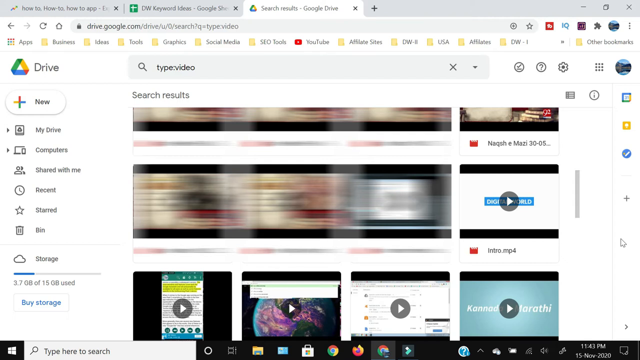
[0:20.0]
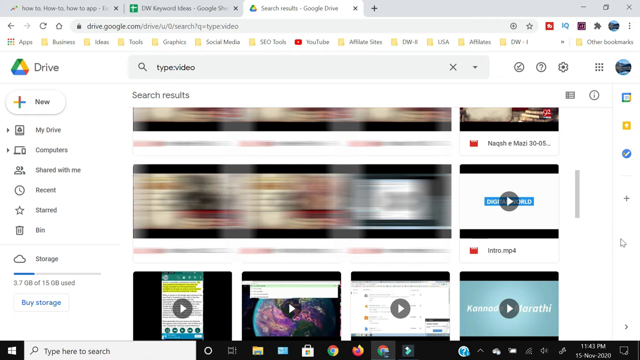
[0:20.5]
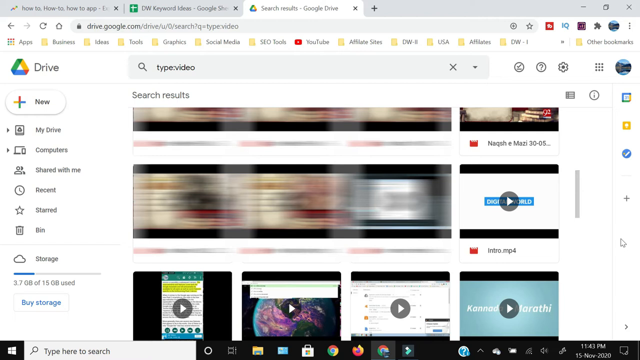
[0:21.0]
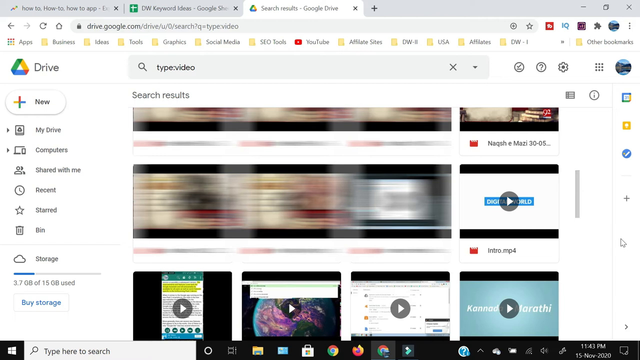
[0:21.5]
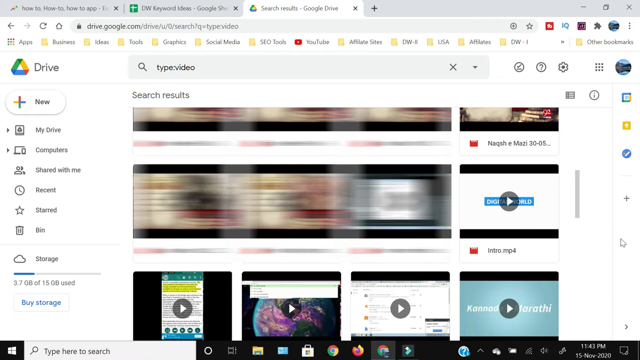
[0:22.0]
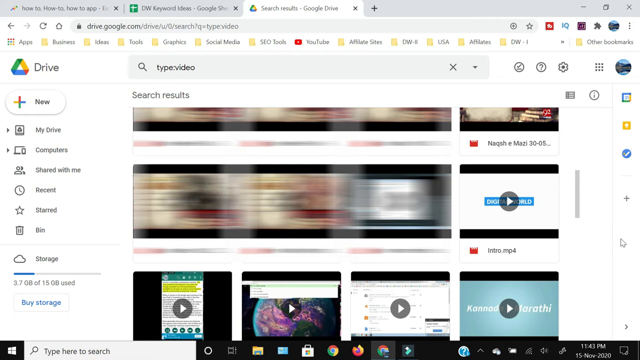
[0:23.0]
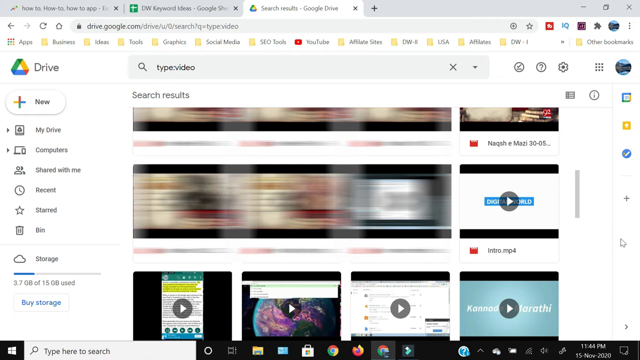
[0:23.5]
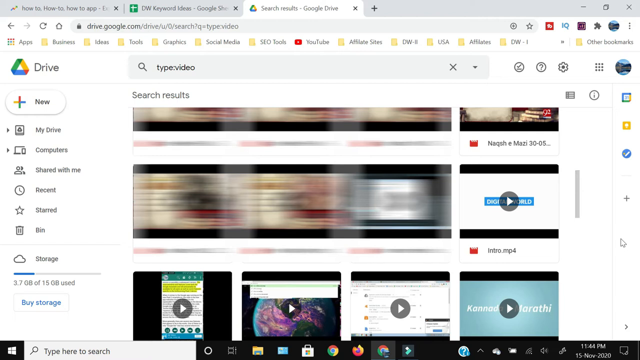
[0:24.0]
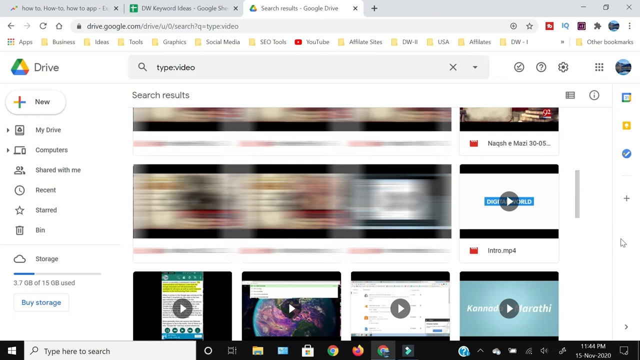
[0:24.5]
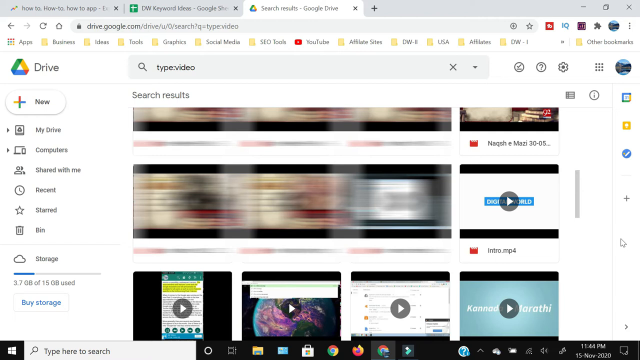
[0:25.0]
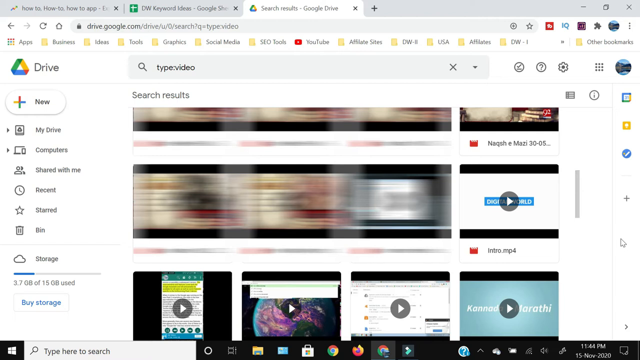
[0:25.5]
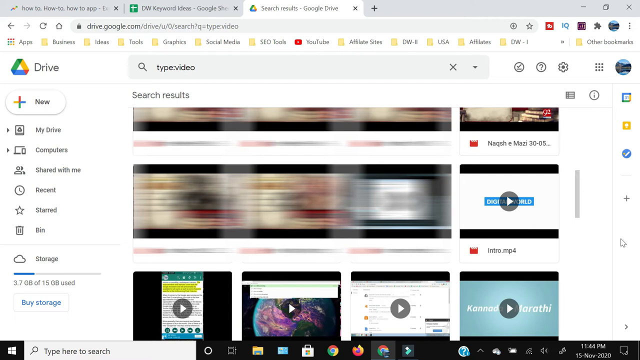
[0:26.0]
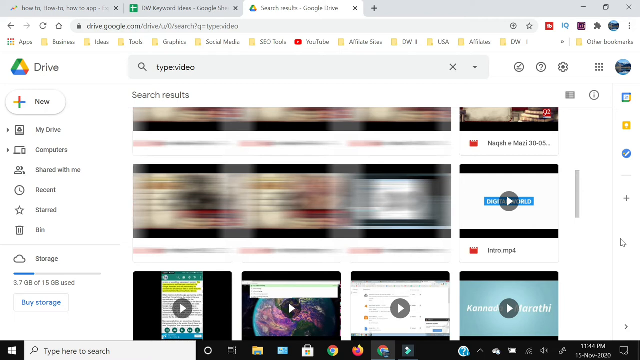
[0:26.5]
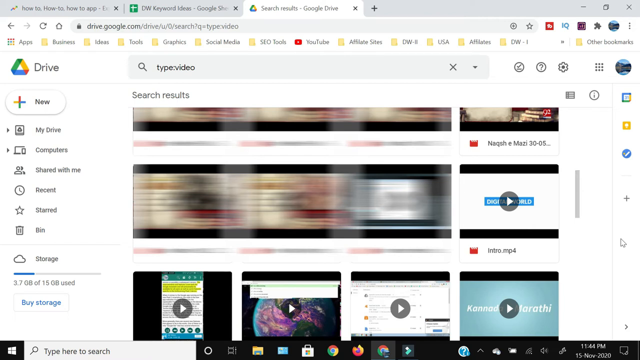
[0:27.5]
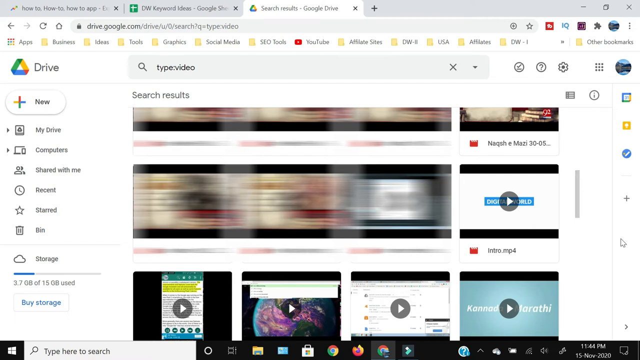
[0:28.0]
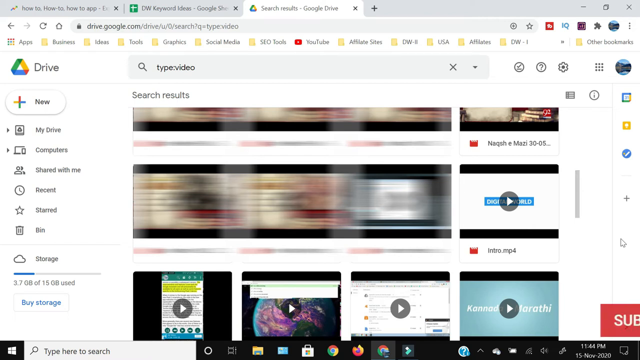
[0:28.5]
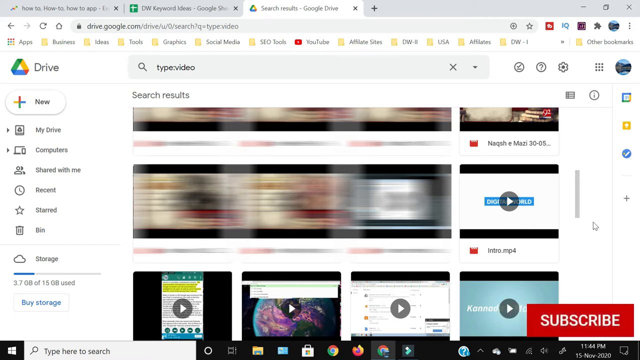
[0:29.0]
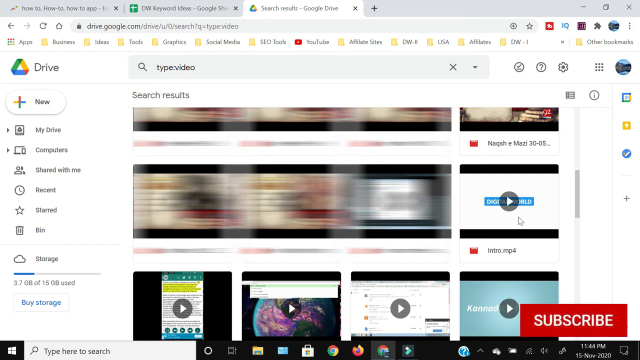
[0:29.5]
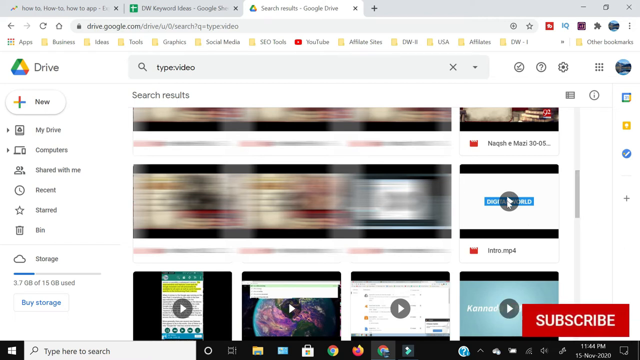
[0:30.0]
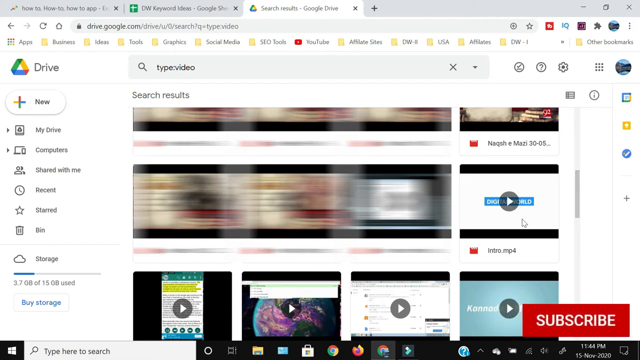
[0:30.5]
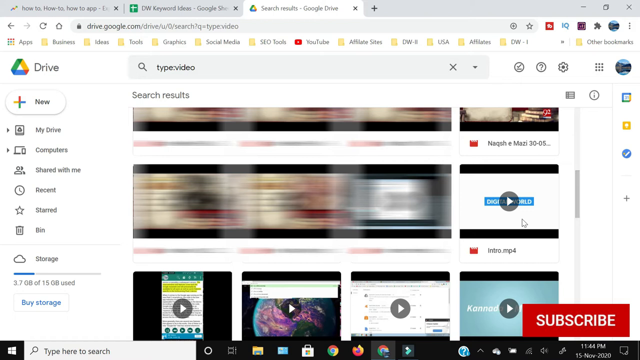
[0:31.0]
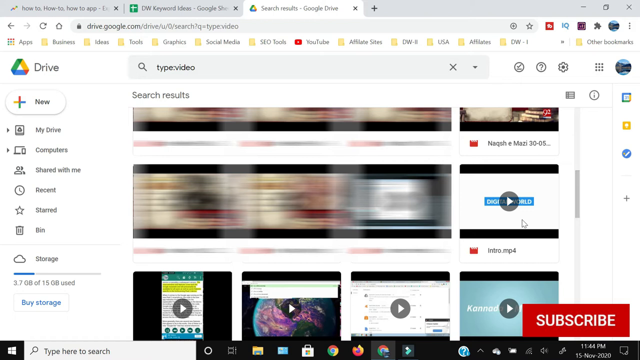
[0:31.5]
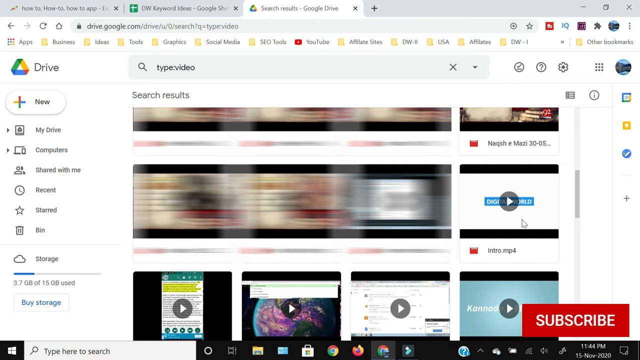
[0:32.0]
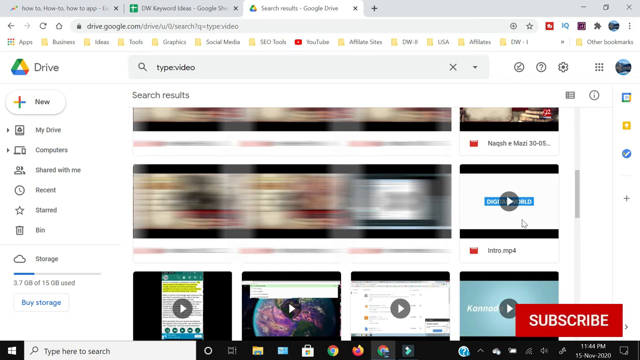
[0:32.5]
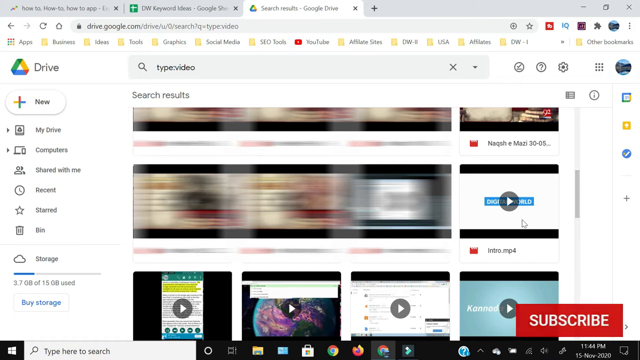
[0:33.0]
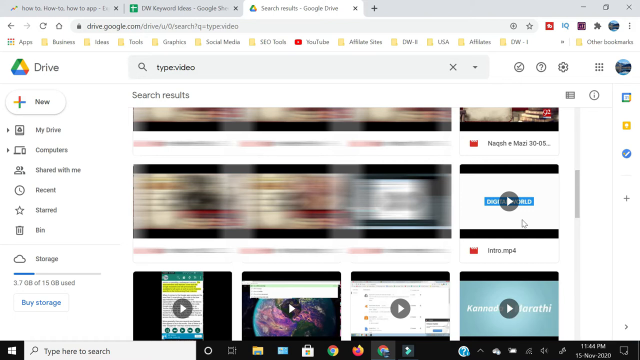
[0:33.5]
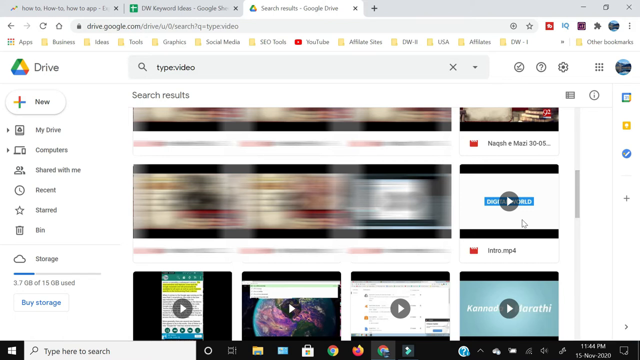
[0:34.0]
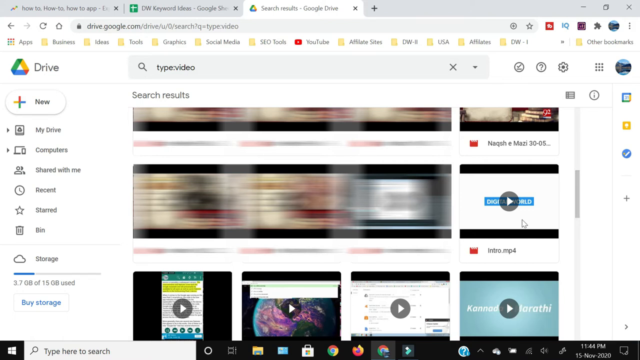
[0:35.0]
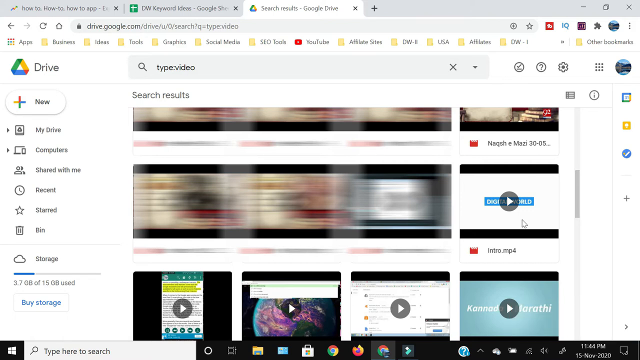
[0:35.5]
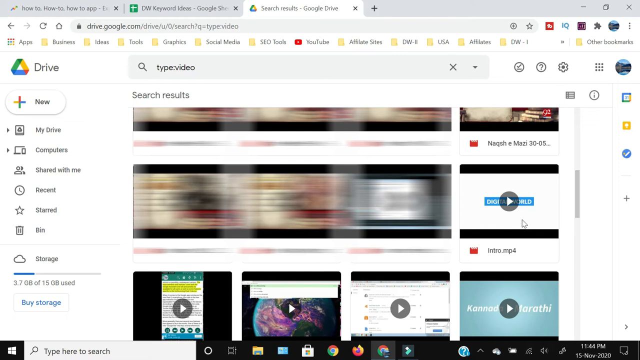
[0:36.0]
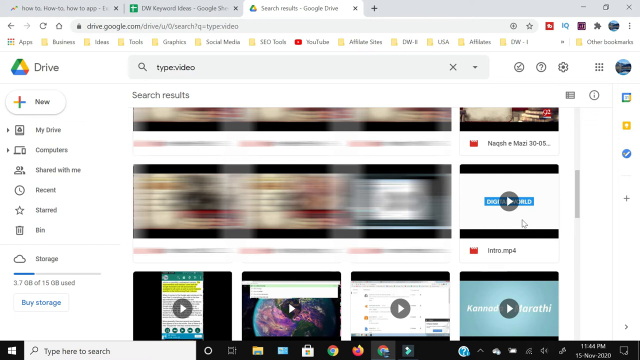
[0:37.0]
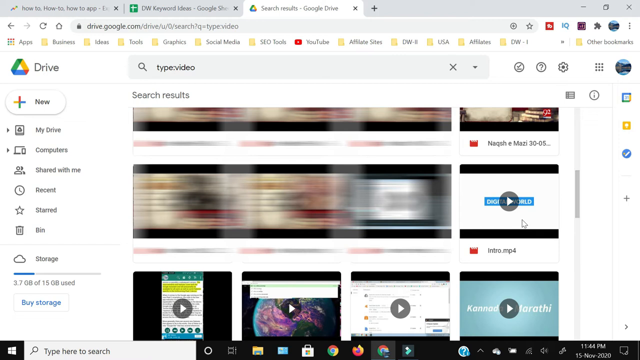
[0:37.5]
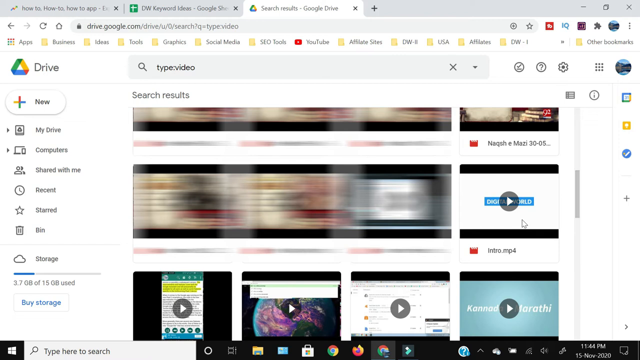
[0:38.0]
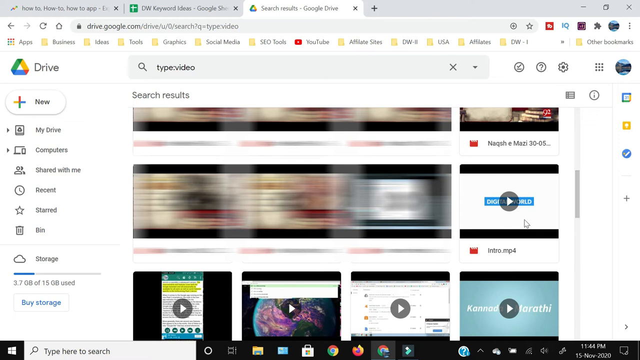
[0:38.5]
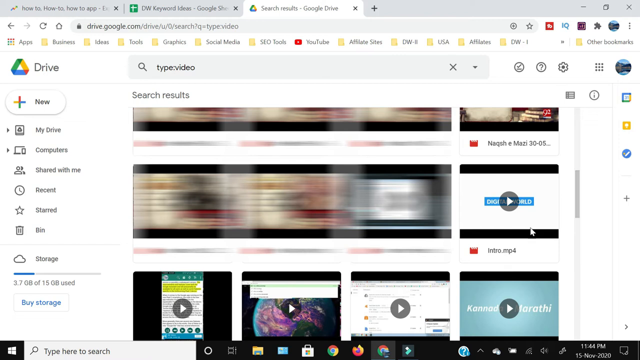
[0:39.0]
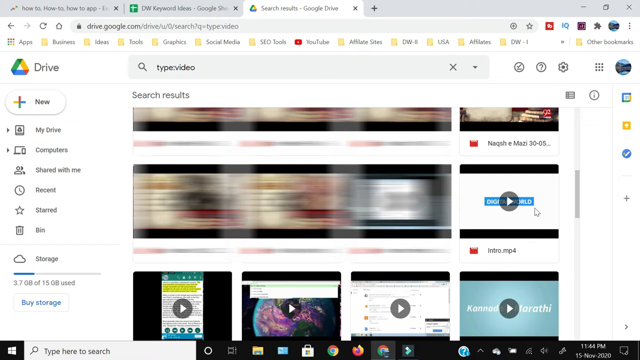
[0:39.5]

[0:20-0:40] The screen shows someone's Google Drive with Kannada and Marathi language songs or videos, plus one that is probably in Urdu but written in English letters. Some videos look blurry. The cursor moves to an mp4 and hovers over it without apparently clicking. The file is "intro.mp4," and "digital world" appears on that item, which looks like a video because of the video icon next to "intro."